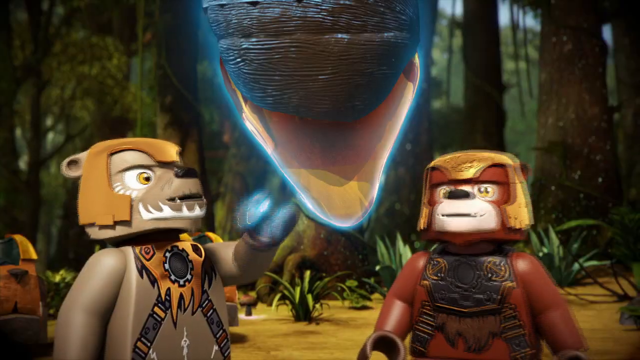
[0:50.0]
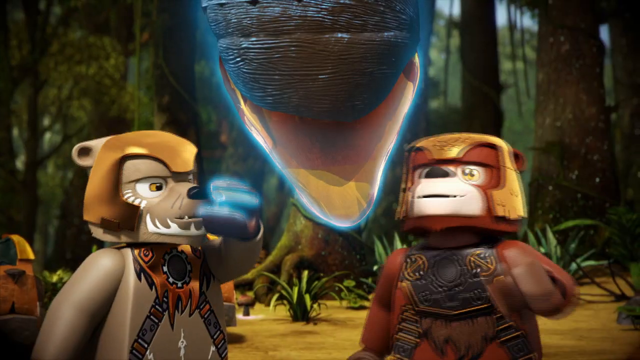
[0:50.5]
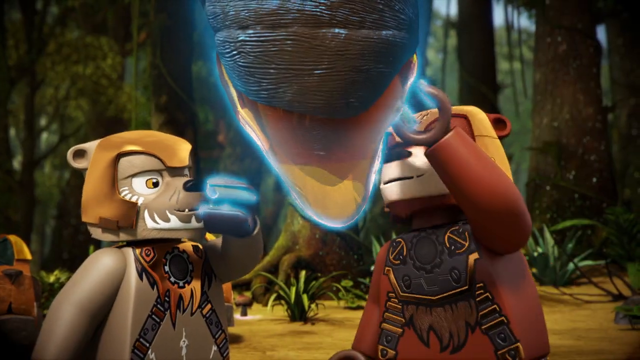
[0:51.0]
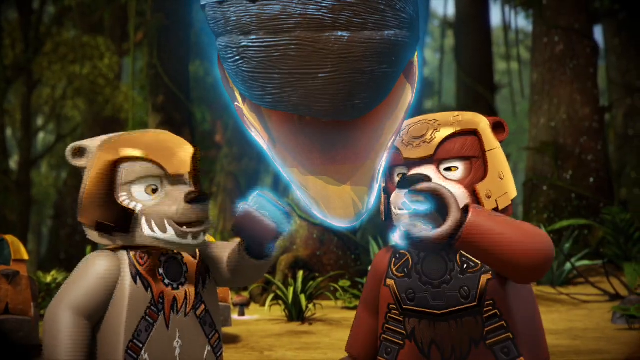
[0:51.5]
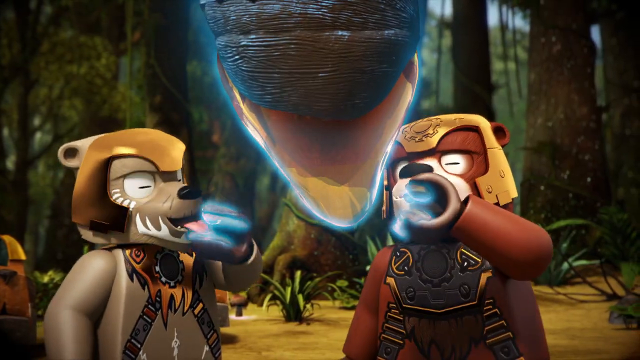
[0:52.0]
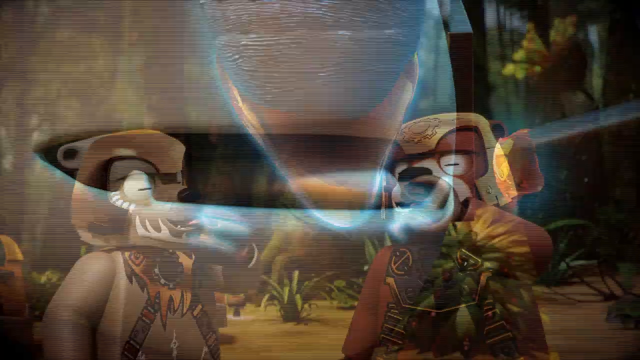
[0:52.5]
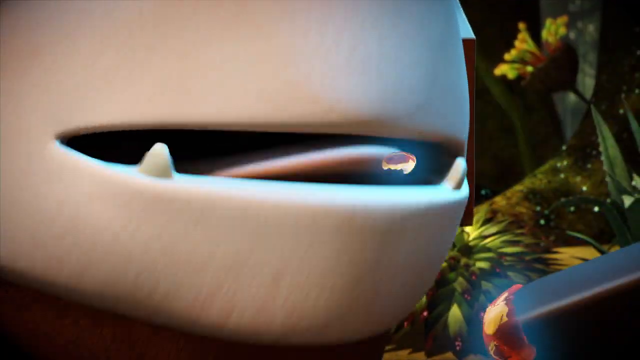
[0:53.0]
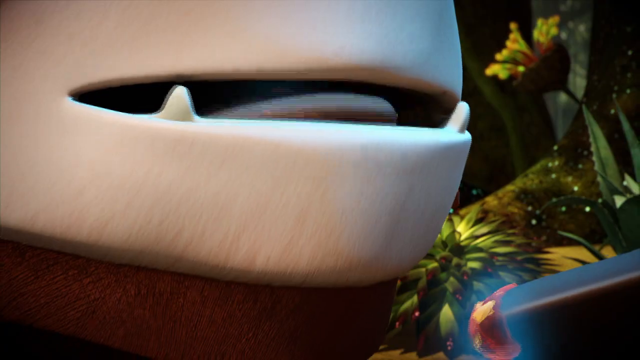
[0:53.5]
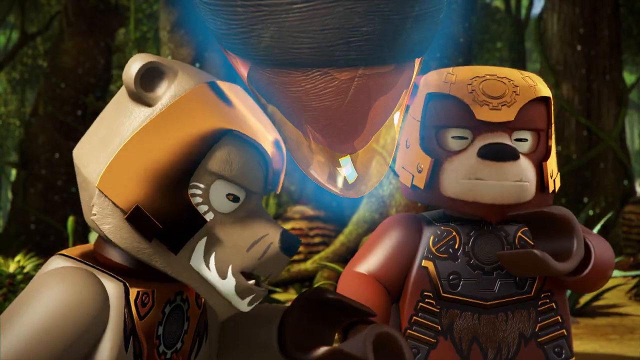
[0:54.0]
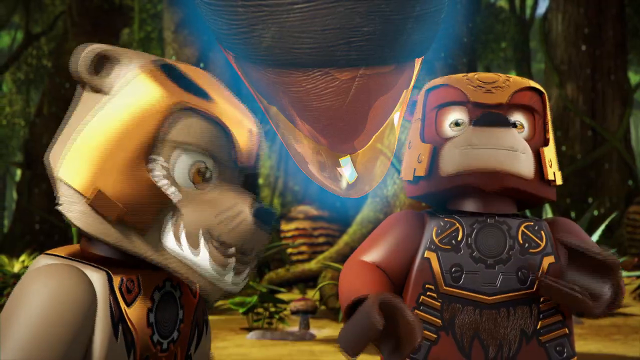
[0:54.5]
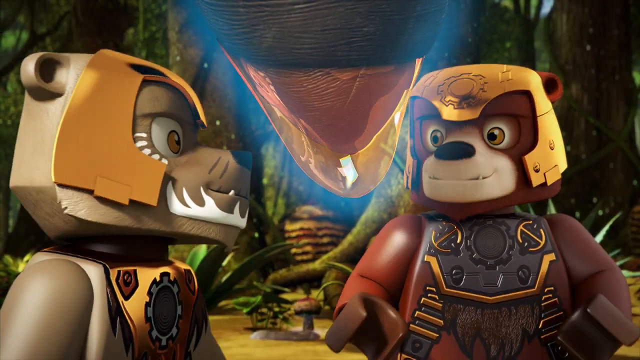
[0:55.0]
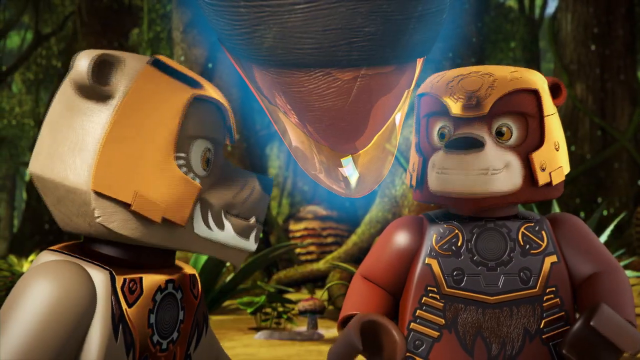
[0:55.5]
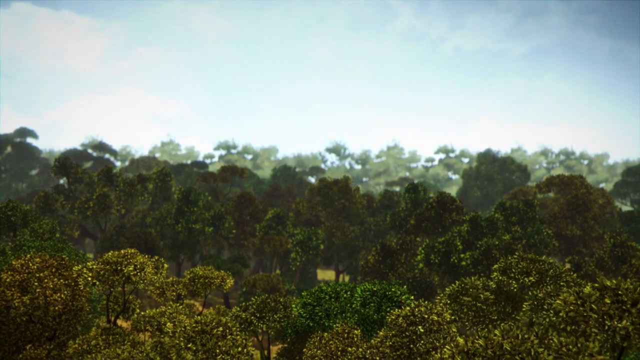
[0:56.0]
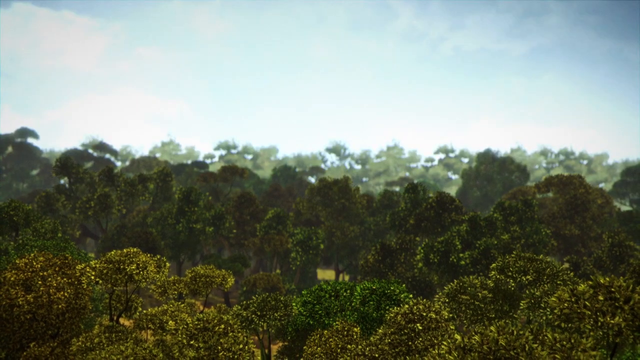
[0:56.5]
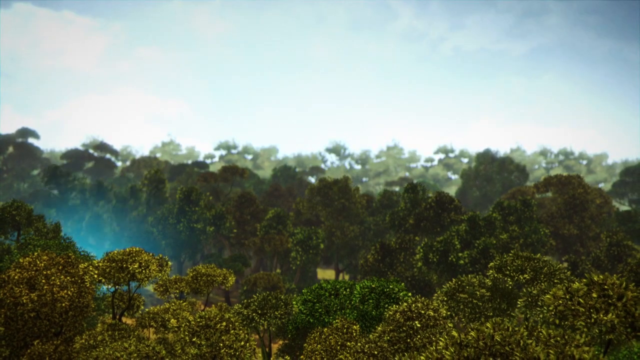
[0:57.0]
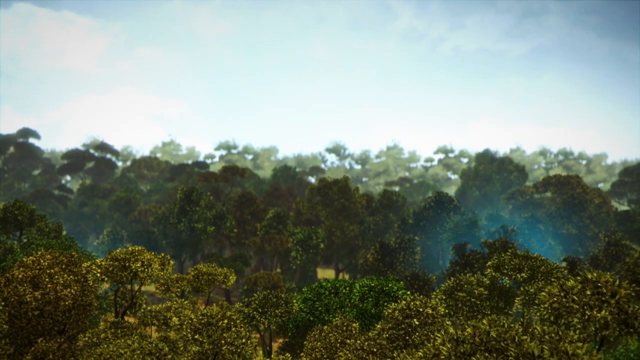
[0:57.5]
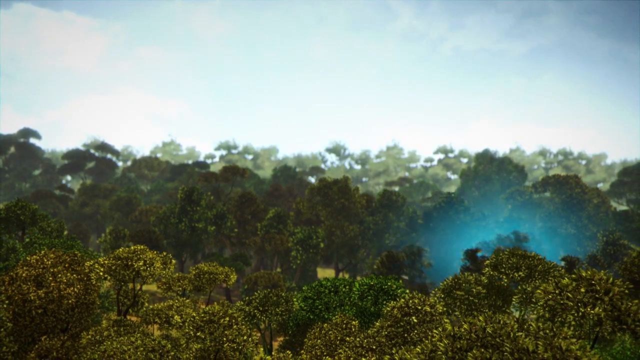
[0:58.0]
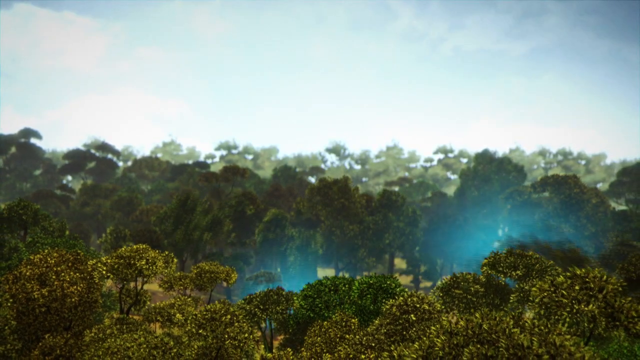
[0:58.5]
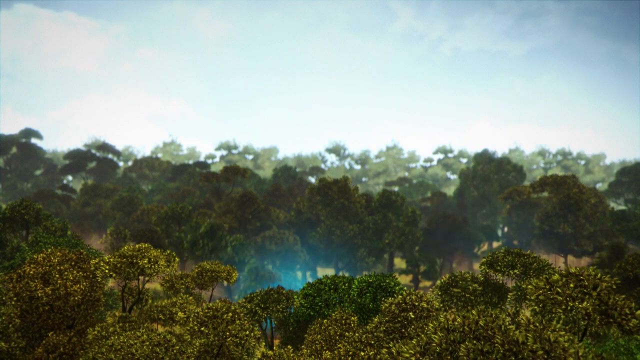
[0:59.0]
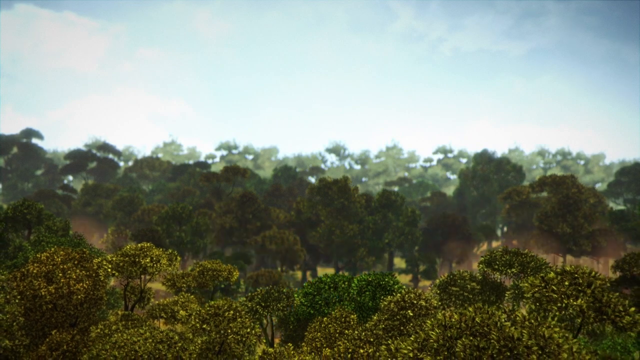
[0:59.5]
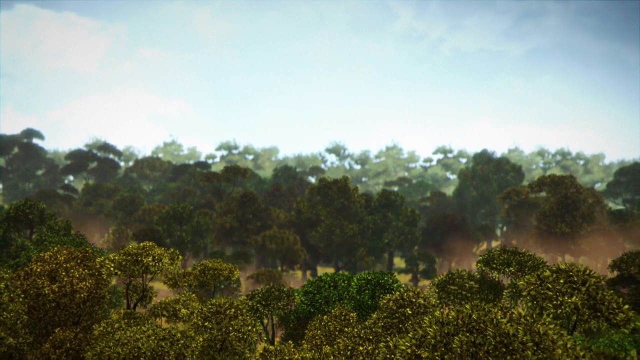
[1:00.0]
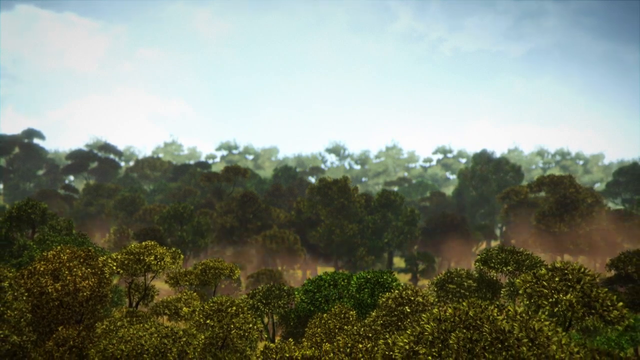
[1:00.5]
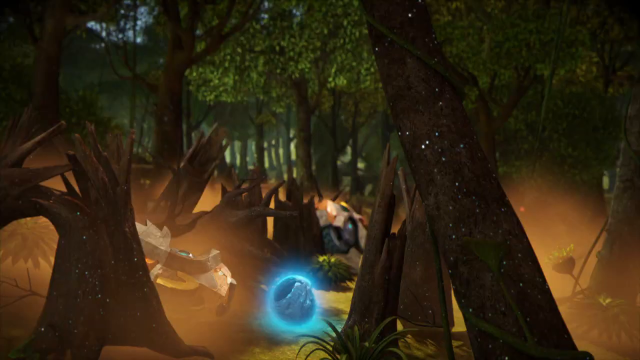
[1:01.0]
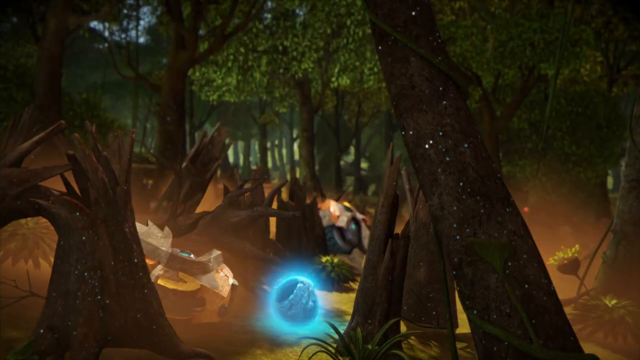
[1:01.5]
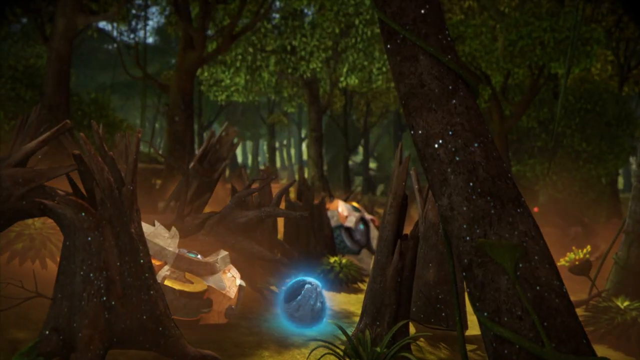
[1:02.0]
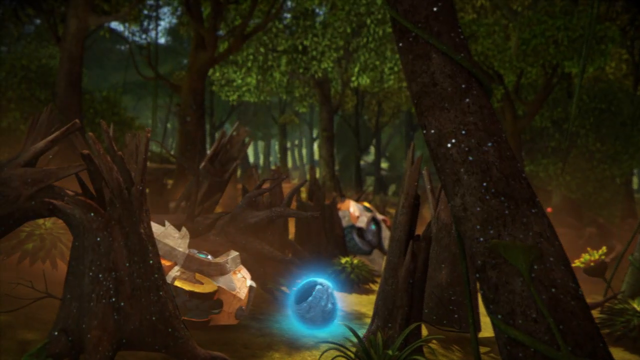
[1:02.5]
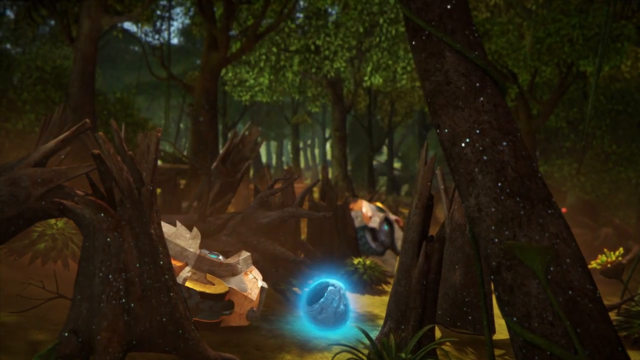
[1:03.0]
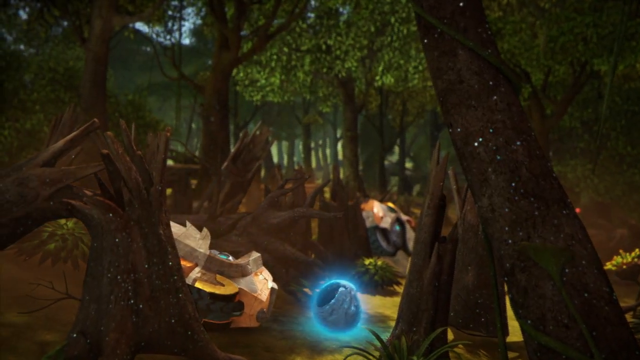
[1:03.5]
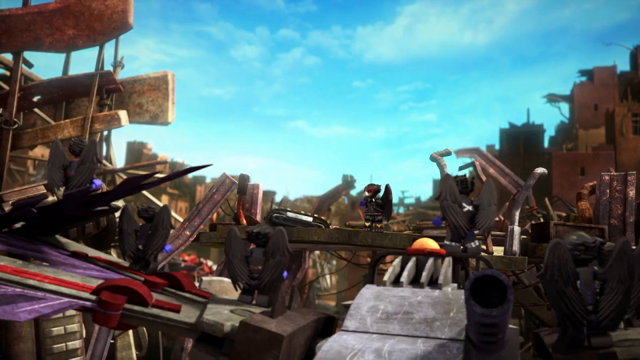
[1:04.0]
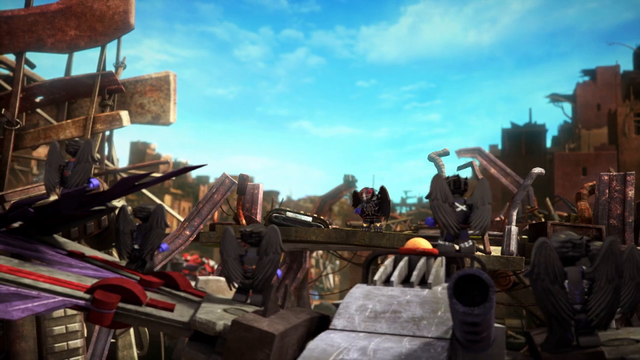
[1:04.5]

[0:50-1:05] The two bear-like soldiers are standing in the forest, having just finished eating the honey taken from the hive. The camera then pans out across the top of the forest, showing a big cloud of smoke as trees are felled, along with a bright light blue glow similar to the power the motorbikes and the crystal ball run on. It is not shown who cuts down the trees, but three large trees have fallen and squashed the motorbikes the bears were riding. At the very end, a bird- or vulture-like character is sitting on a horizontal beam among some ruins beneath the beam, with spaceships nearby.